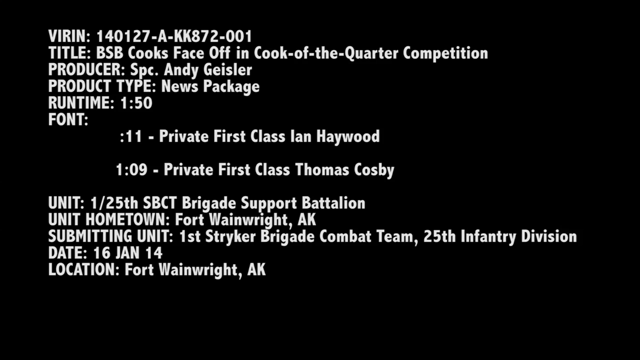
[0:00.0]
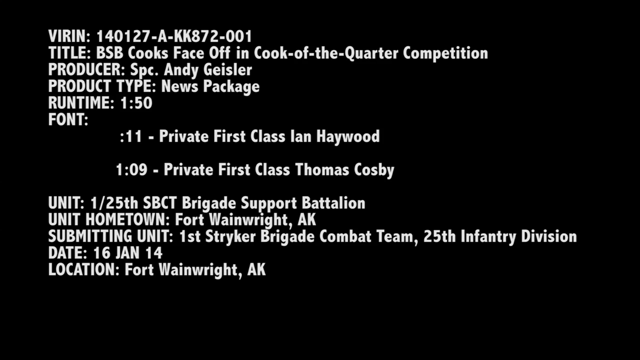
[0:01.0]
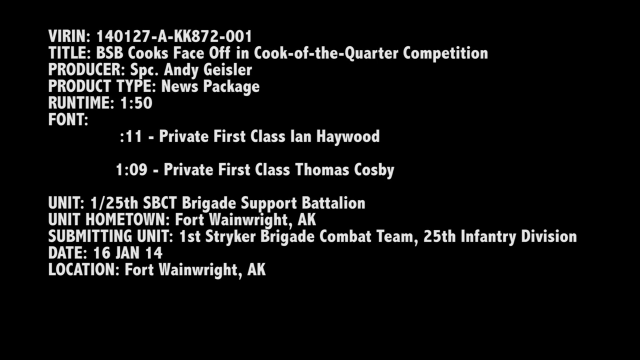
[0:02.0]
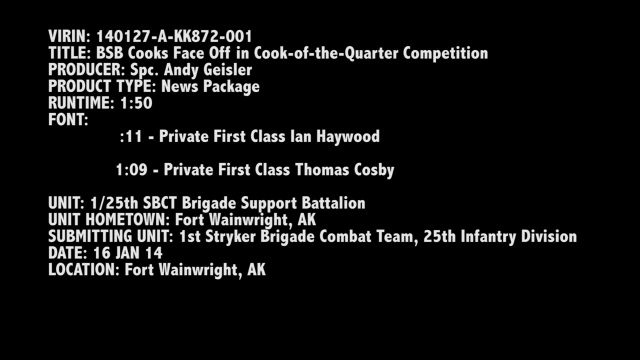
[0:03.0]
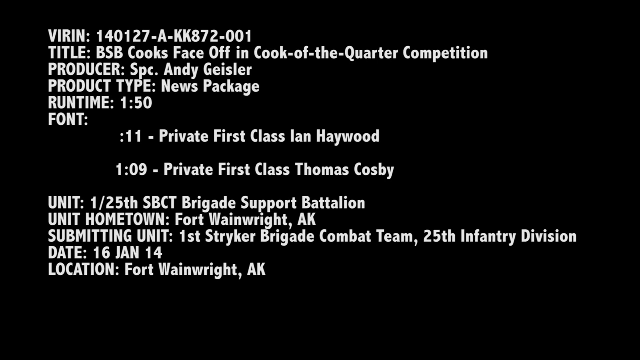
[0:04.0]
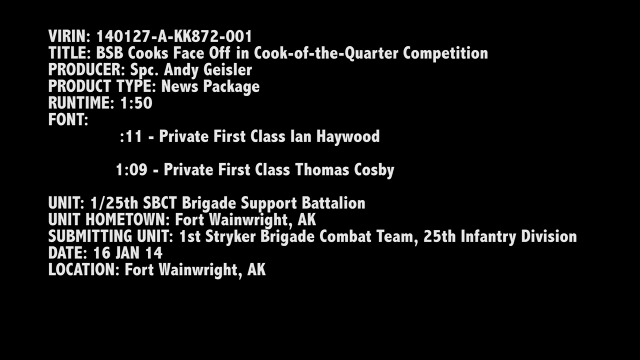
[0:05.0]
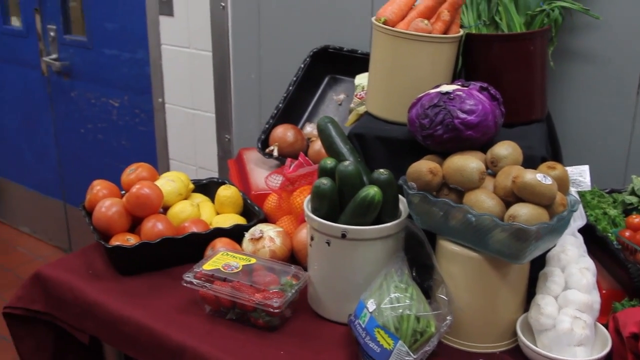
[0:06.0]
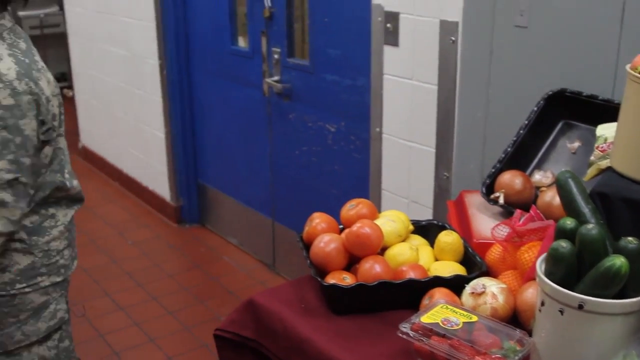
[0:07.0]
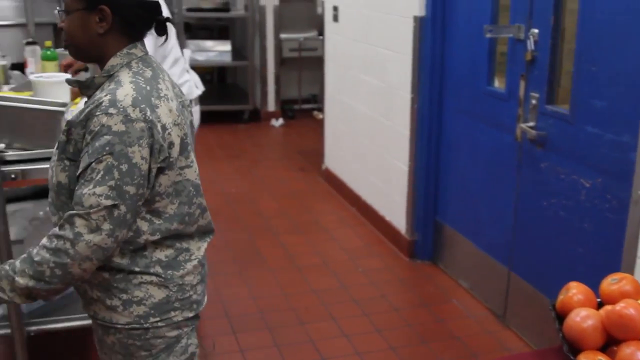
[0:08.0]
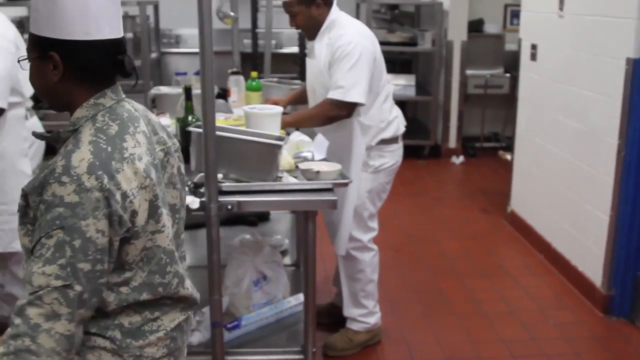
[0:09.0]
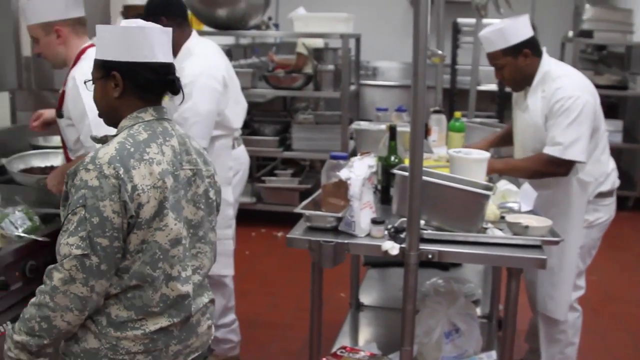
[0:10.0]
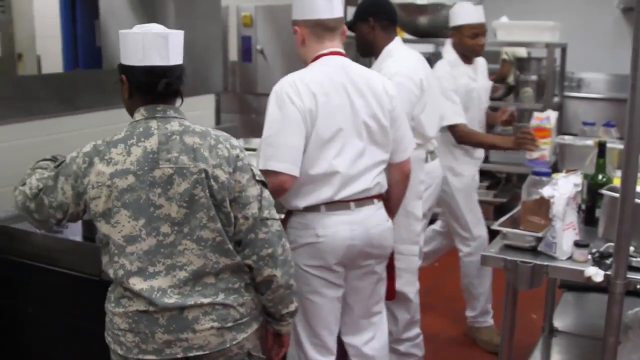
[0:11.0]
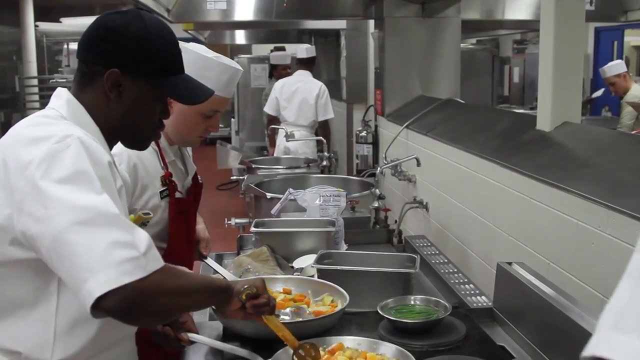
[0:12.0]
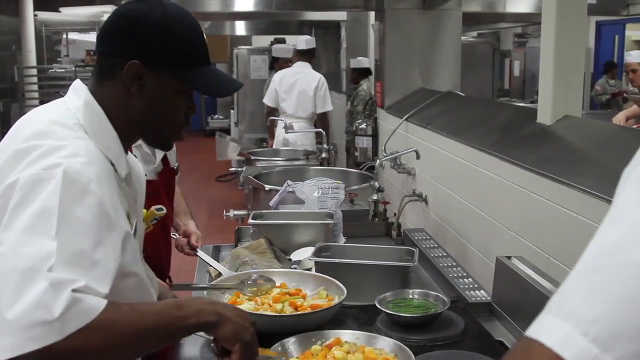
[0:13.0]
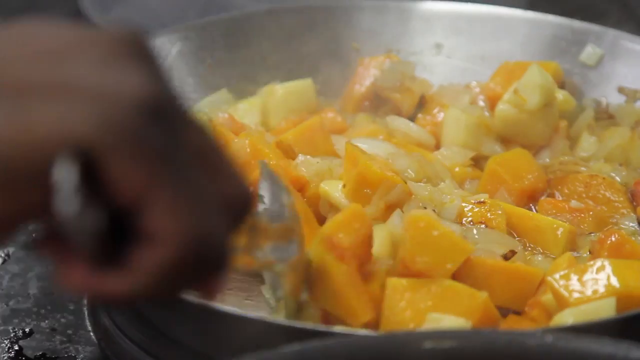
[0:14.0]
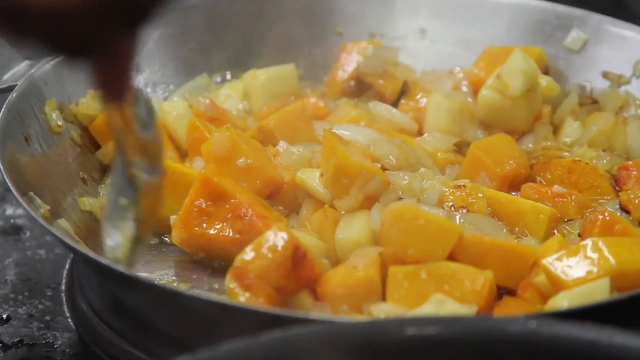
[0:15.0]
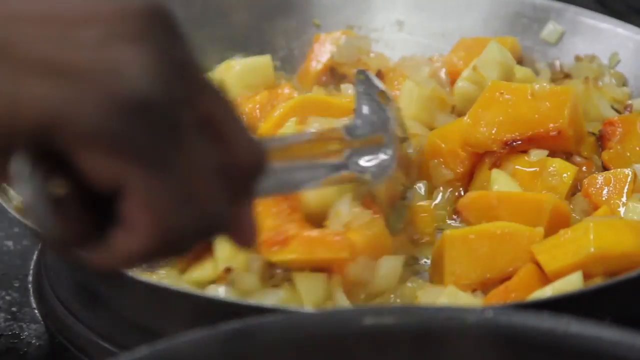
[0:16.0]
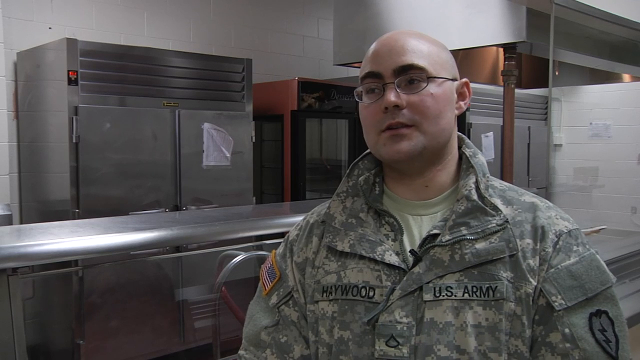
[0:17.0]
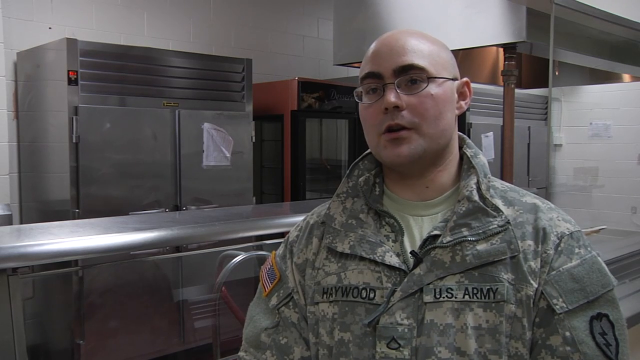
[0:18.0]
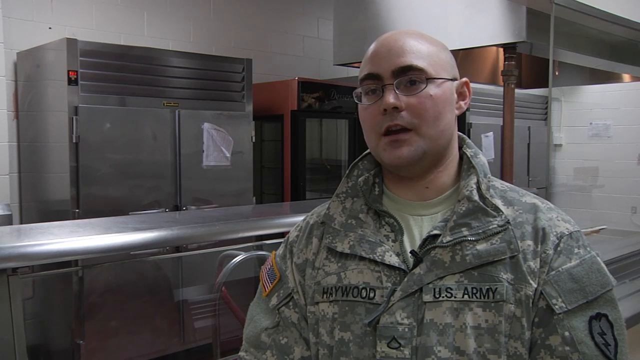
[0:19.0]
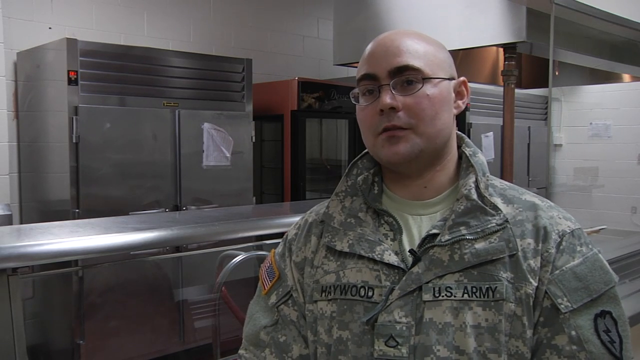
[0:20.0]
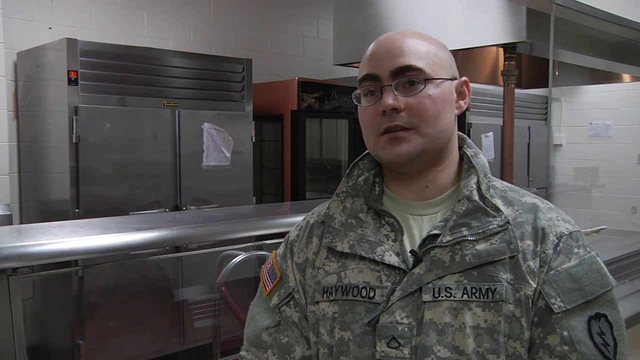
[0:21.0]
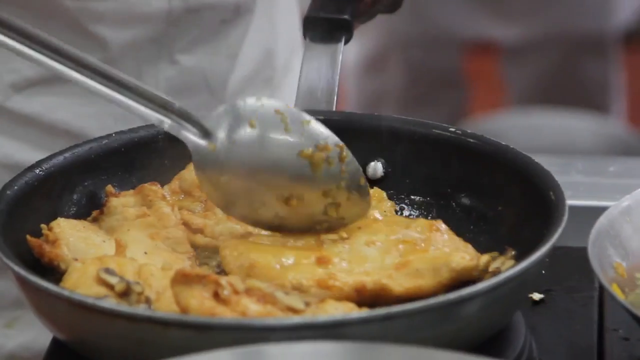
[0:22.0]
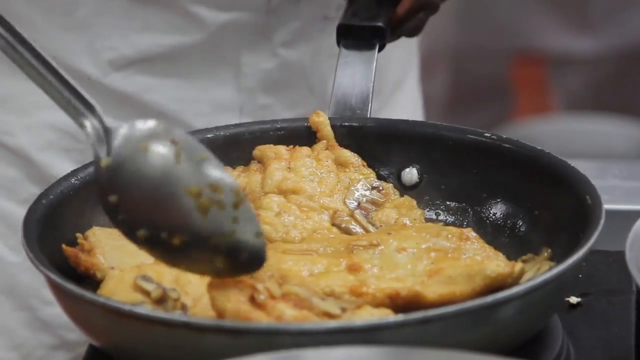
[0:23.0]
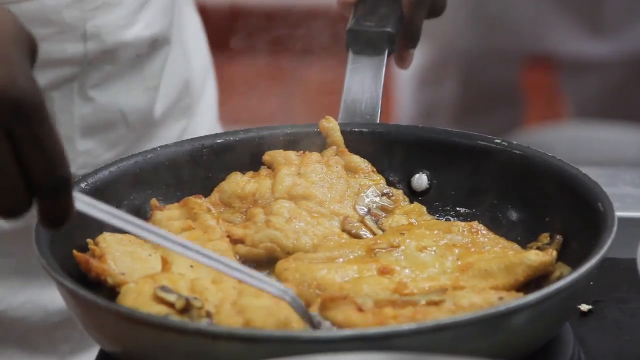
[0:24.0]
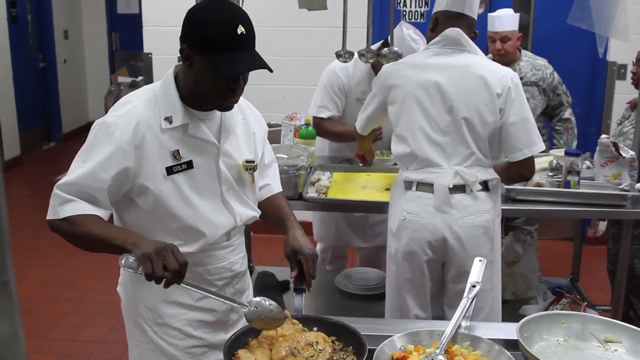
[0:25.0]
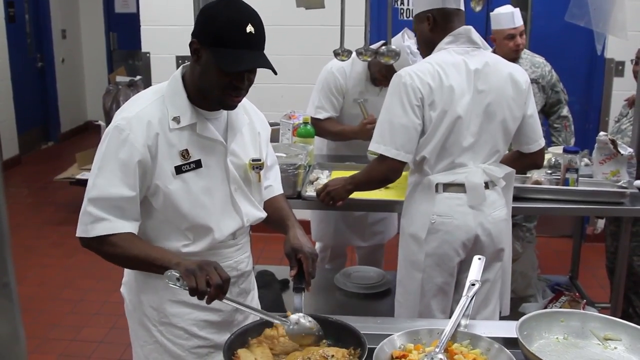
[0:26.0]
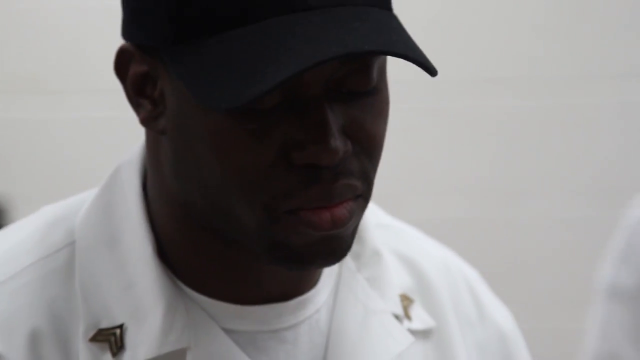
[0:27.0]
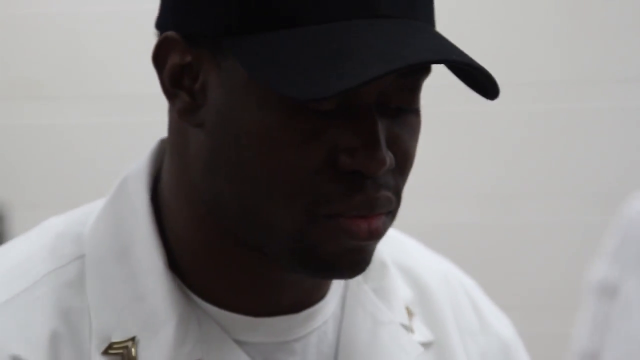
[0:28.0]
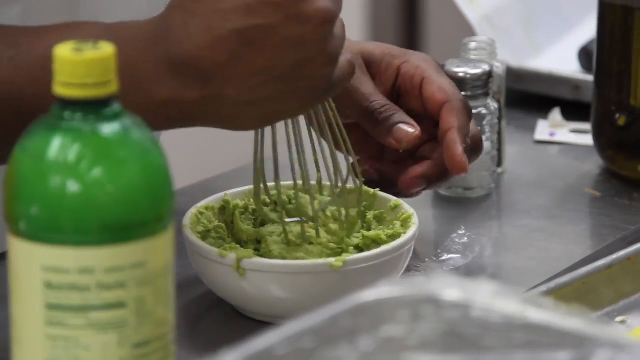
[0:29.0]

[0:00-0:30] A black screen with lots of white text and some numbers appears. It reads the title "BSB cooks face off in cook off the quarter competition", names the producer, gives the product type as "news package" and shows "runtime 150". Next comes a table of produce, with various containers holding strawberries, lemons, kiwi, courgettes and carrots, among other things. The camera pans around to a quite chaotic kitchen scene behind, which looks like a professional kitchen: everything is oversized, there is lots of metal, and there are different stations with people doing different things. At a wok, somebody stirs what looks like squash and onions. A bald-headed man wearing an army uniform looks to the right of the camera and talks; his jacket reads "Hayward, US Army". The next scene seems to show some chicken, perhaps with mushrooms, being fried in a pan, and someone flips it with a spoon held in his right hand. Then somebody uses a whisk to mash some avocado in a small white bowl, with a bottle of lemon juice next to it.